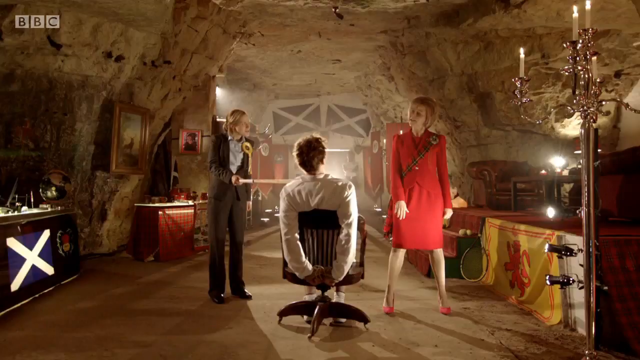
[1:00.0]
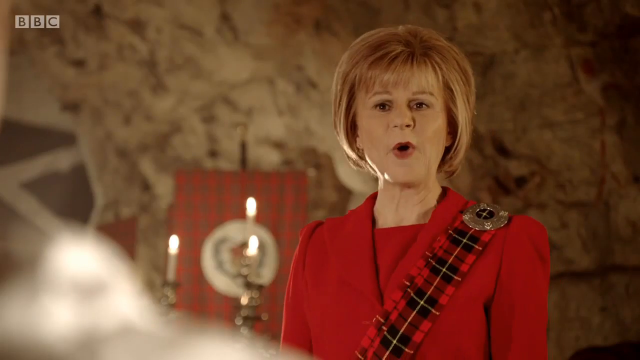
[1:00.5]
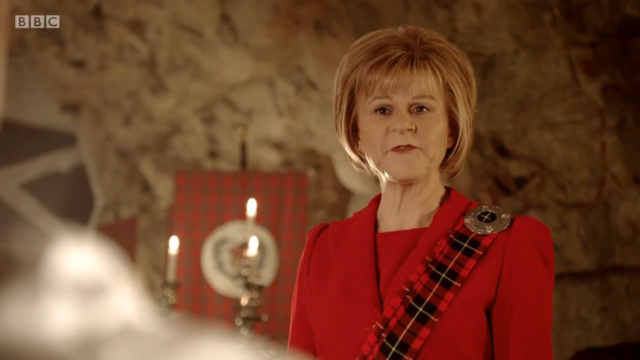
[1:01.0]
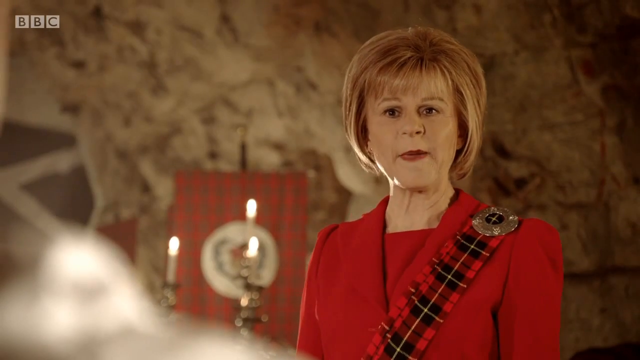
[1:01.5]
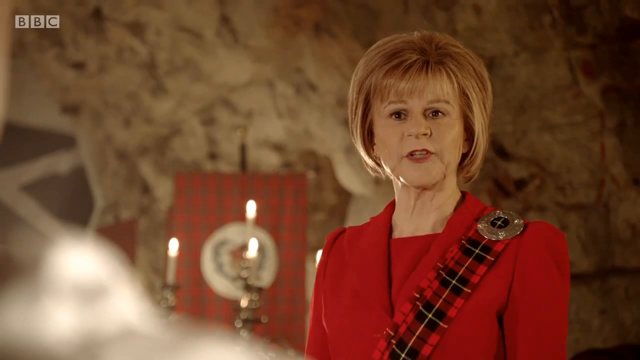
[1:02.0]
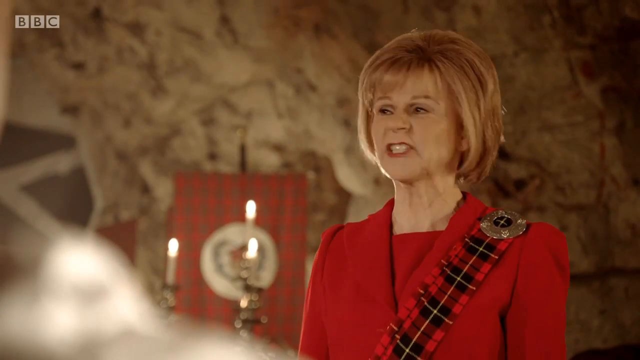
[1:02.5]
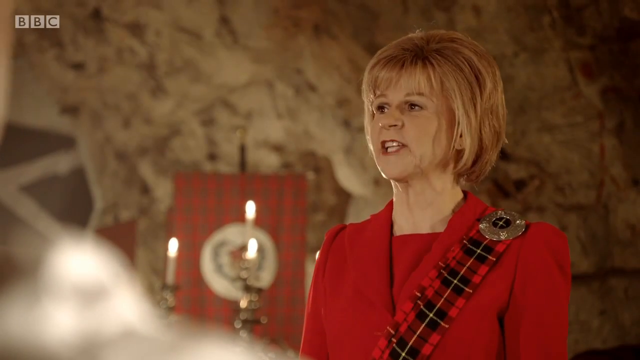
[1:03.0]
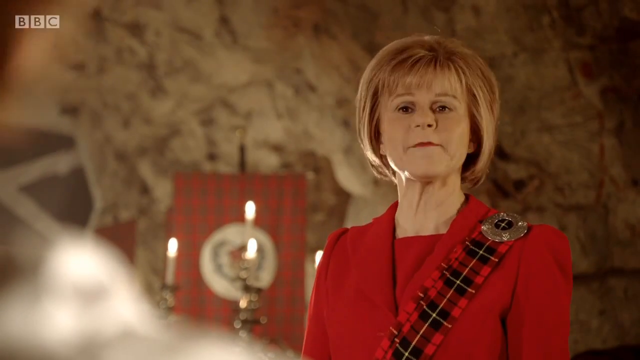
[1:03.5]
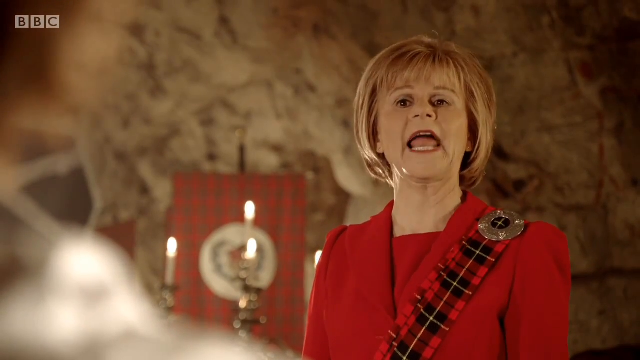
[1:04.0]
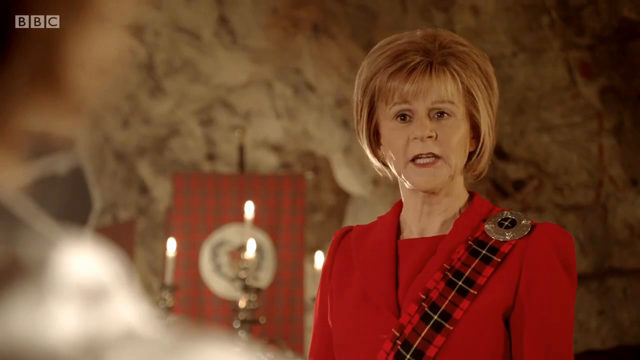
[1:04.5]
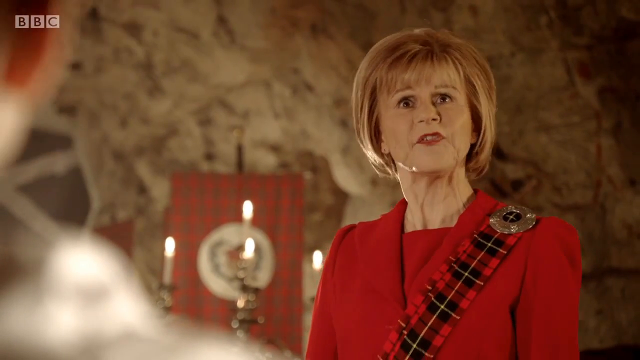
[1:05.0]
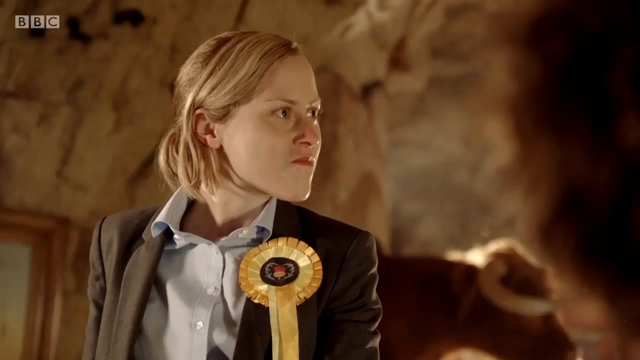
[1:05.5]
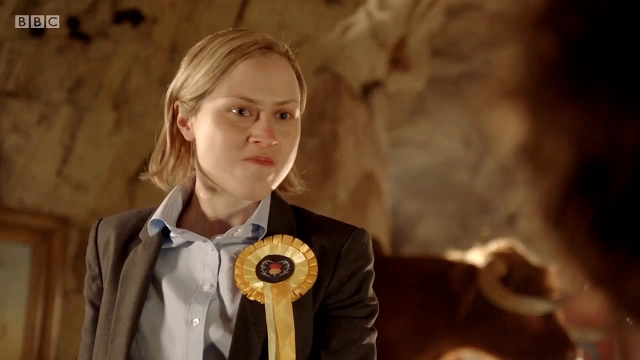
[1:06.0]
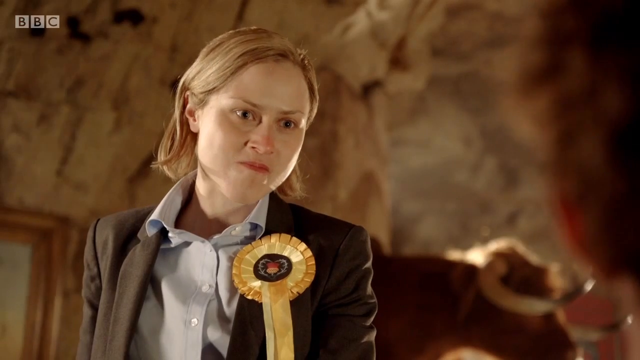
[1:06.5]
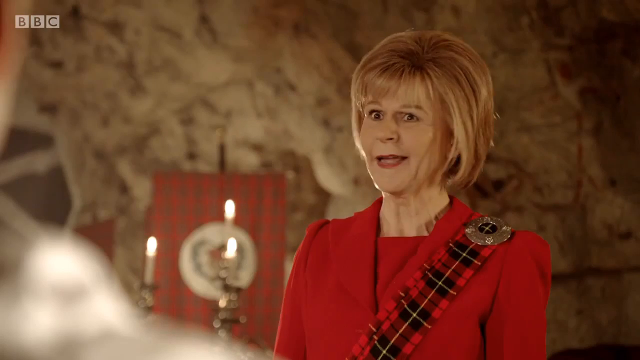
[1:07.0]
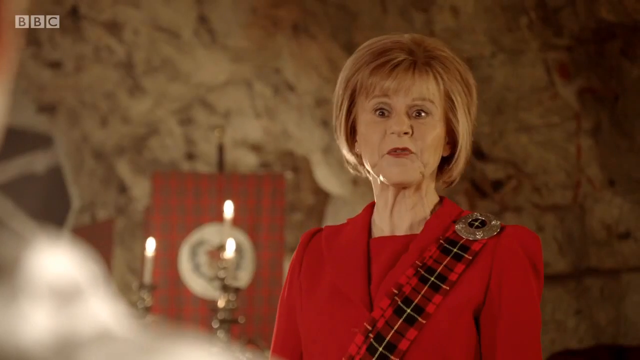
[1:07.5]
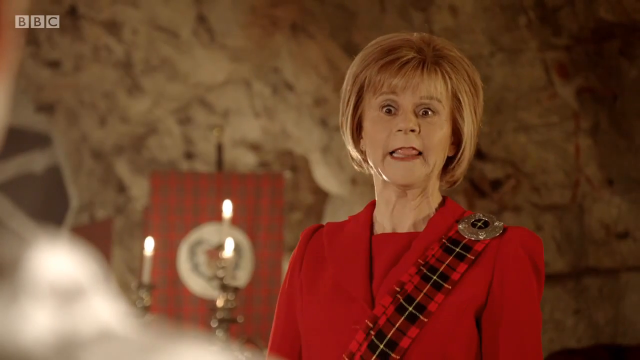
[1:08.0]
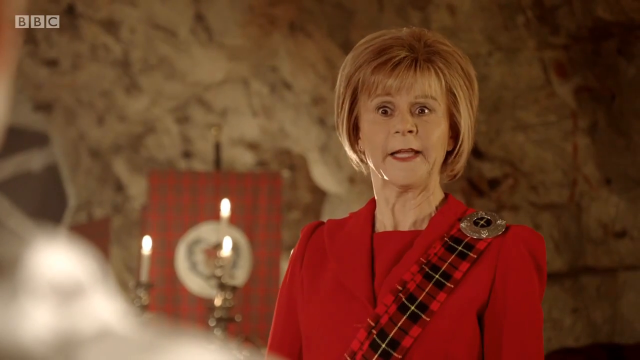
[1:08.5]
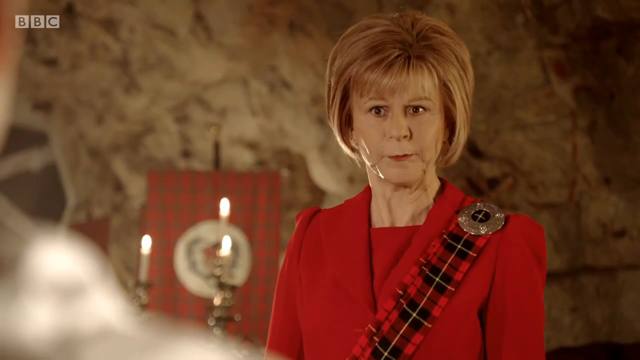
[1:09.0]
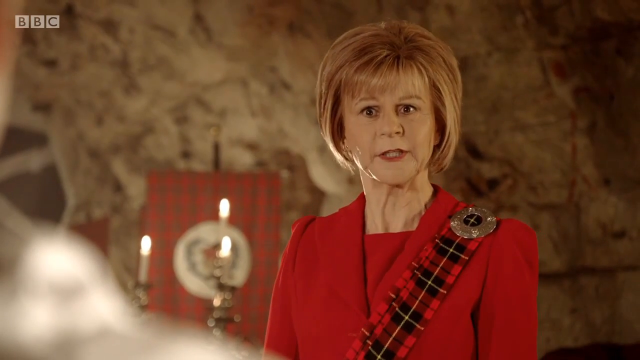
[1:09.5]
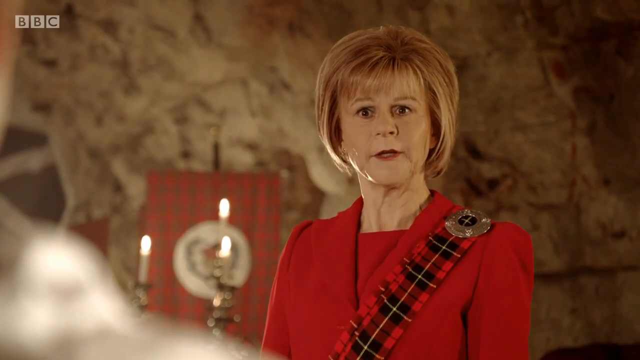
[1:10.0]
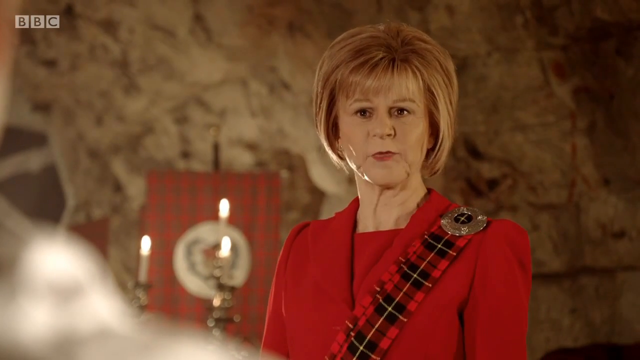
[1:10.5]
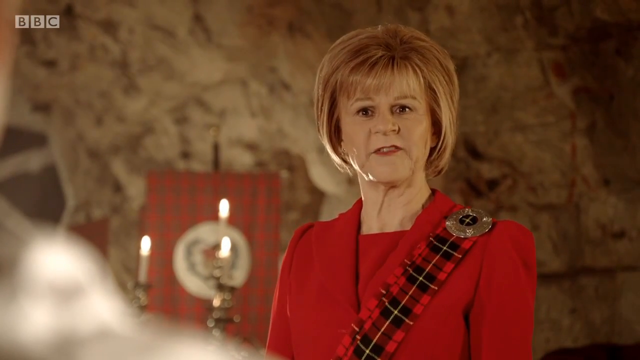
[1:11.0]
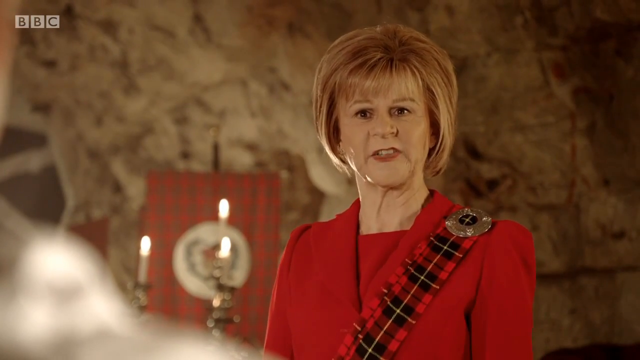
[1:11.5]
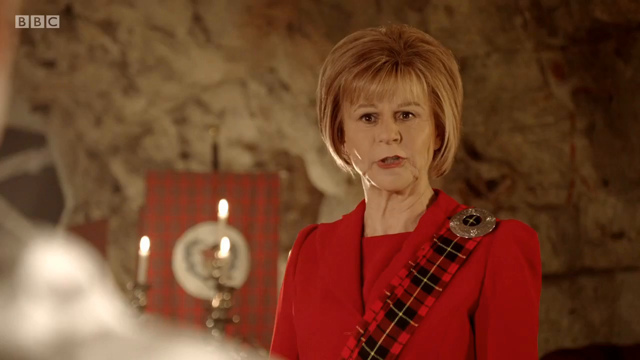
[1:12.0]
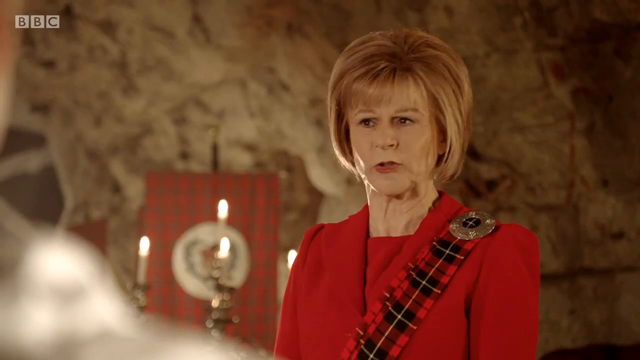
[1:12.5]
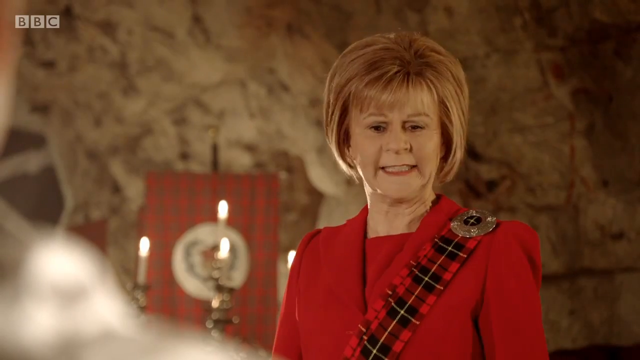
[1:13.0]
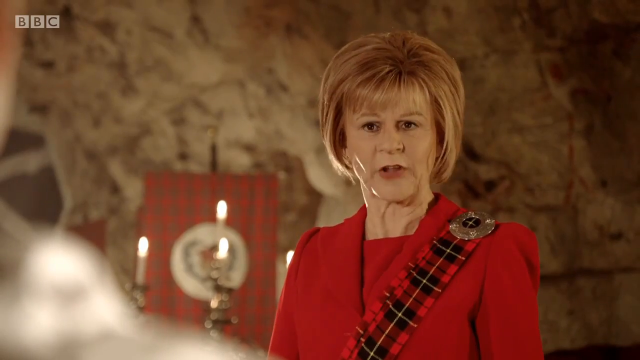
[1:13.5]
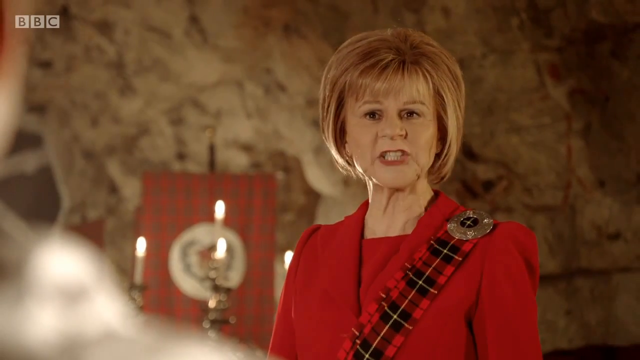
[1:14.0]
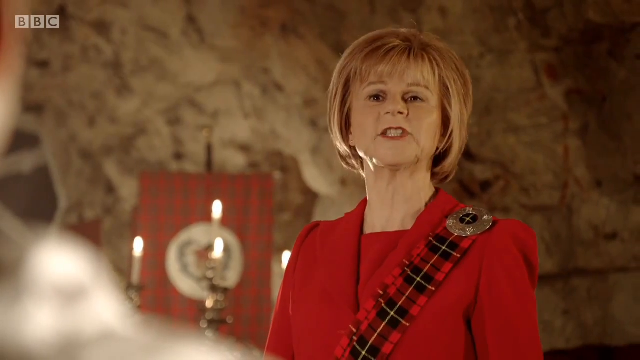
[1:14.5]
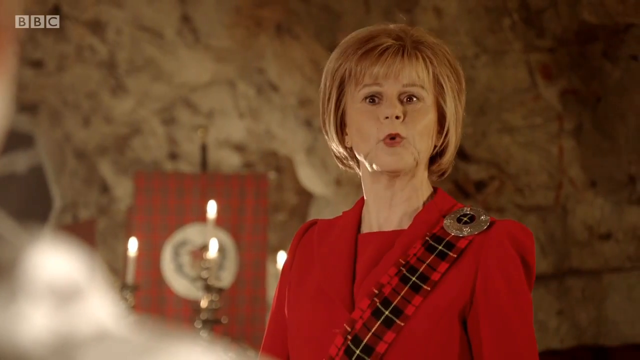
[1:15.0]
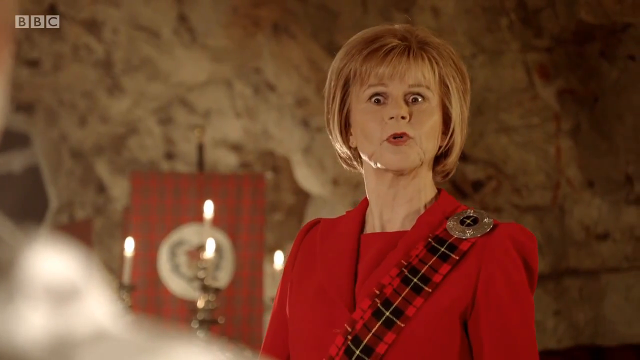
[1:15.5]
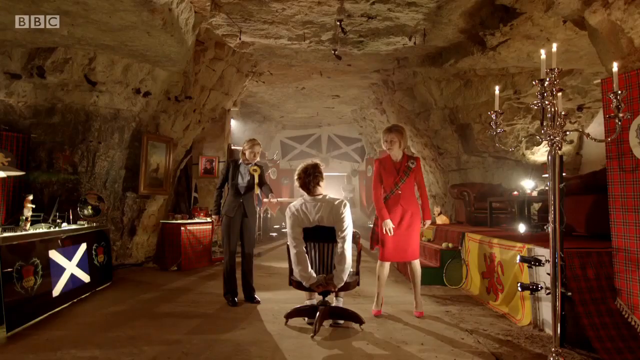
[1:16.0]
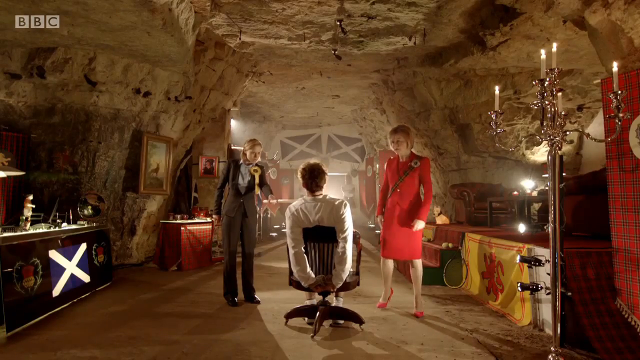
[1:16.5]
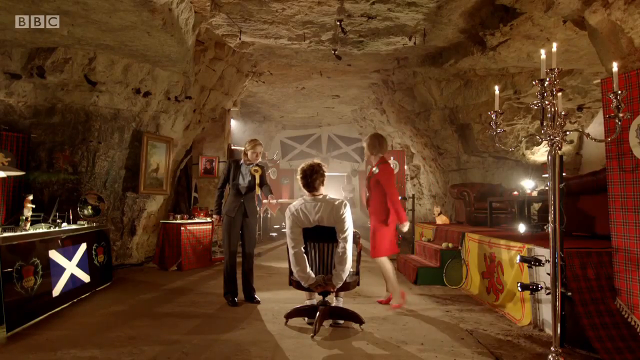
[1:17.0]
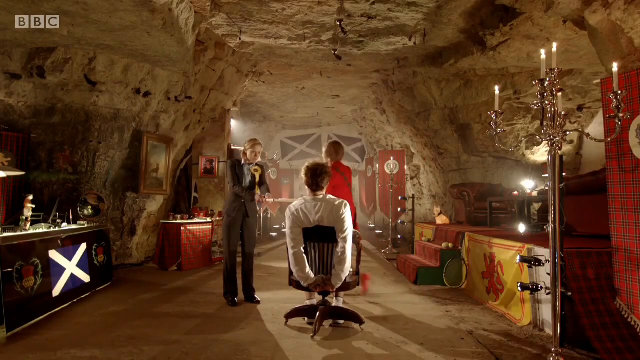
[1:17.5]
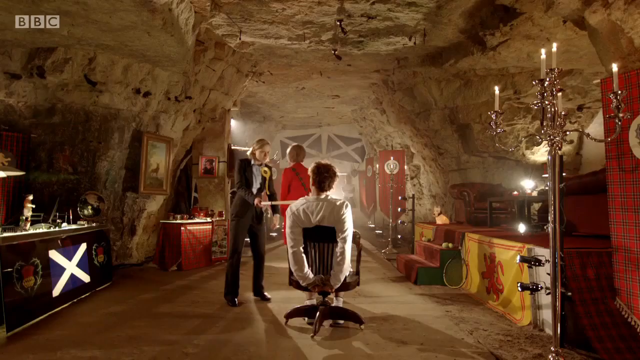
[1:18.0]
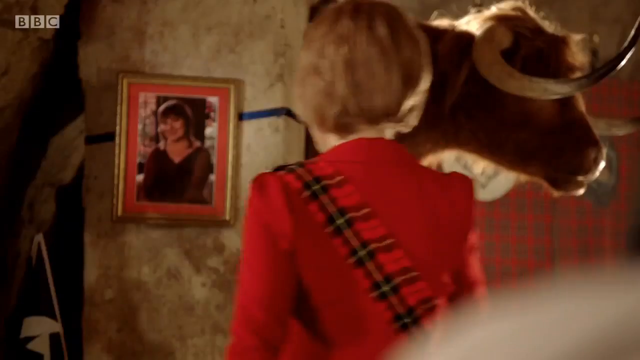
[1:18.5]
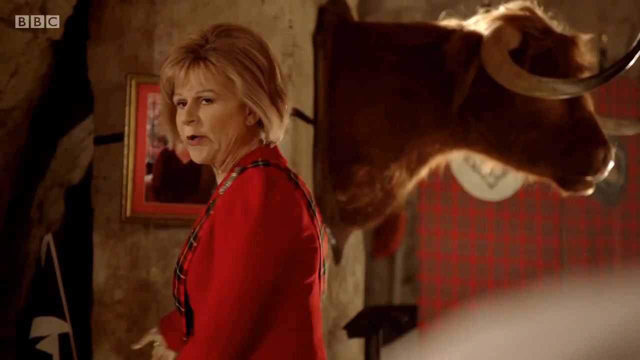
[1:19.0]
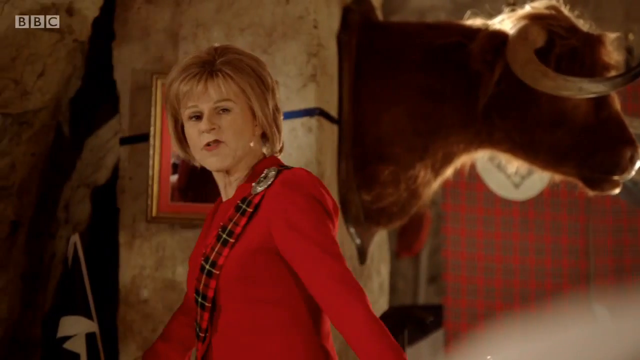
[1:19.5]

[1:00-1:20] A close-up shows a woman wearing a red jacket and a red t-shirt, with light-colored, rather short hair and a red and black checkered belt. A wider shot follows with three people in the center, two women and a man. On the right is the woman in red; on the left is another woman in a black jacket, a light-colored shirt and dark pants. In the center, a man in a white shirt sits on a dark chair with his hands tied behind it. The two women move around him and talk to him, and the woman on the left points a wooden stick at him. The shot ends with a close-up of a woman in a red jacket, a red t-shirt and a black belt.